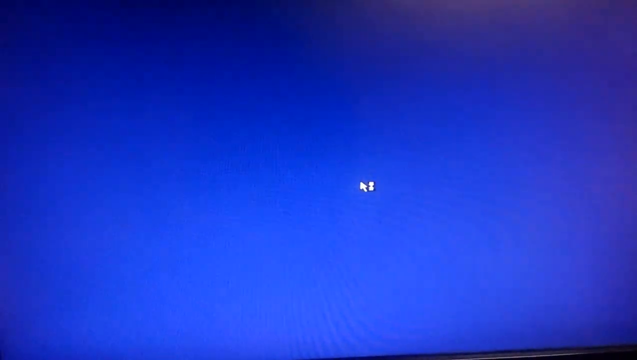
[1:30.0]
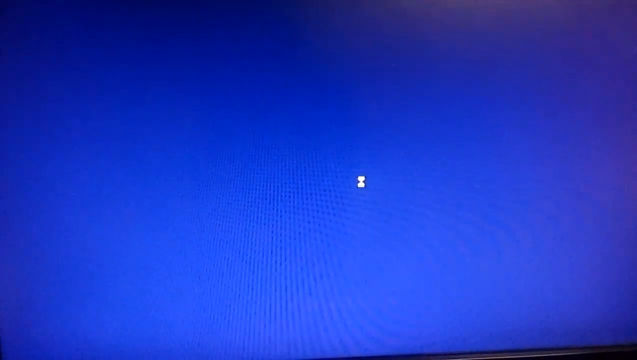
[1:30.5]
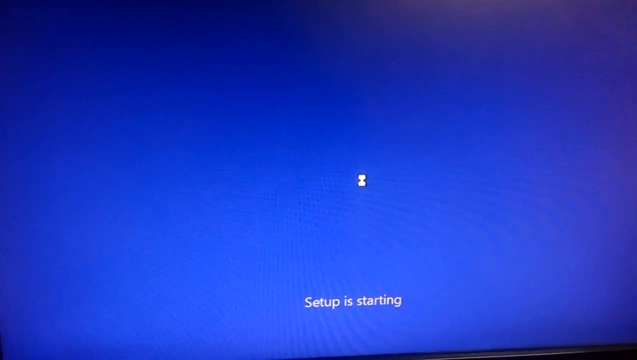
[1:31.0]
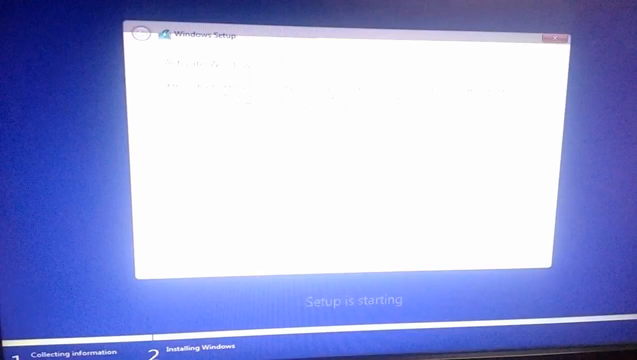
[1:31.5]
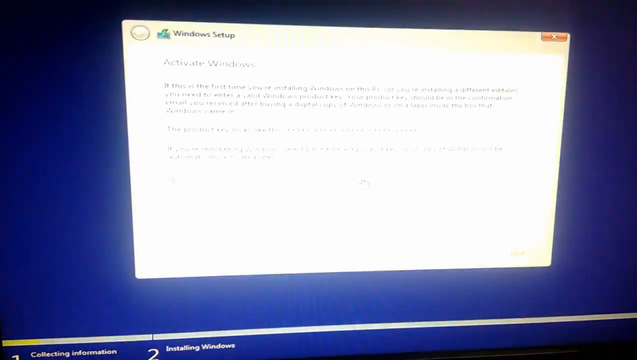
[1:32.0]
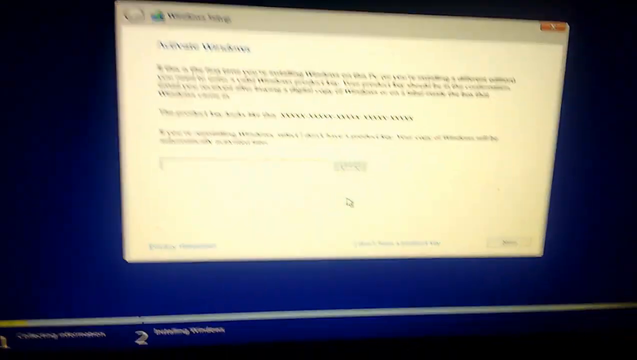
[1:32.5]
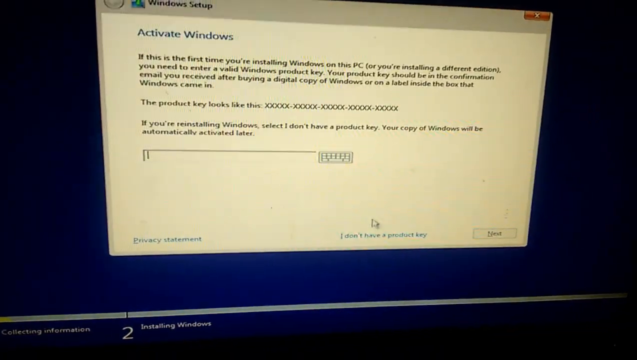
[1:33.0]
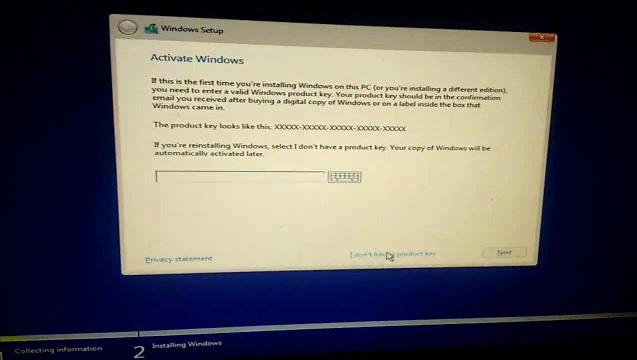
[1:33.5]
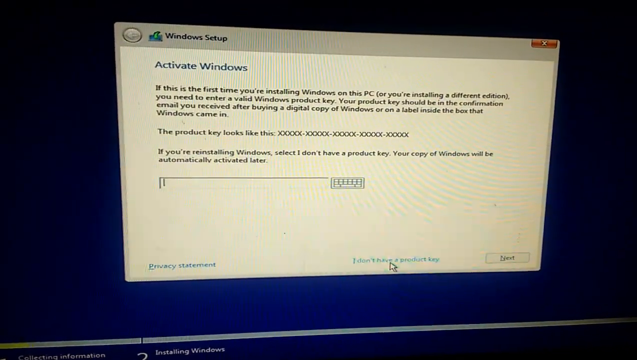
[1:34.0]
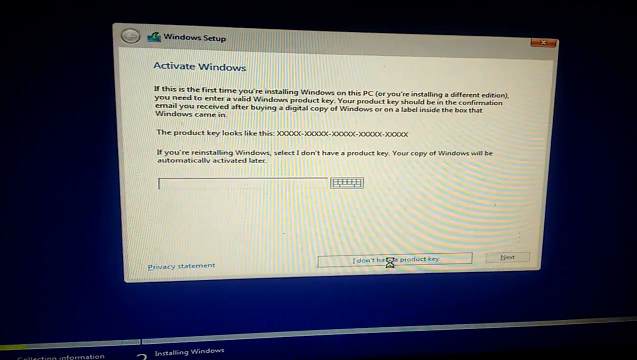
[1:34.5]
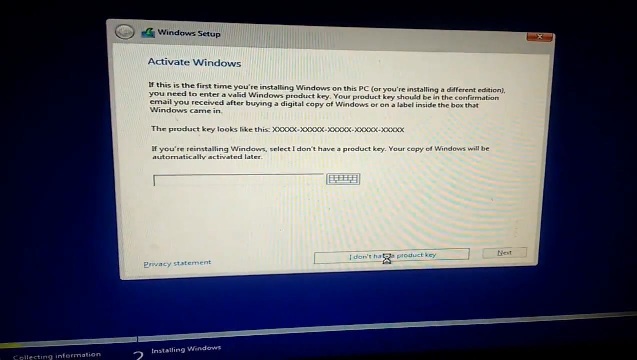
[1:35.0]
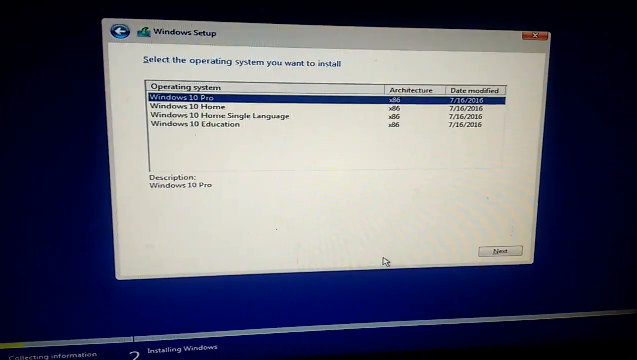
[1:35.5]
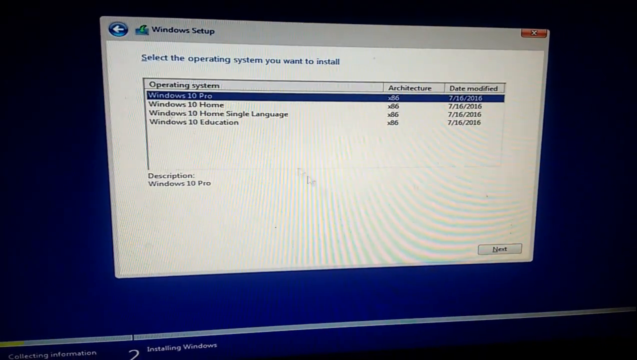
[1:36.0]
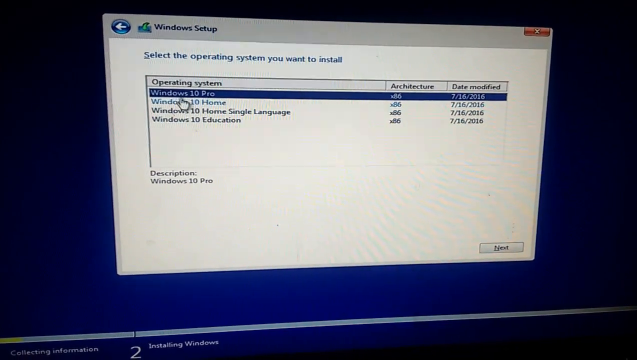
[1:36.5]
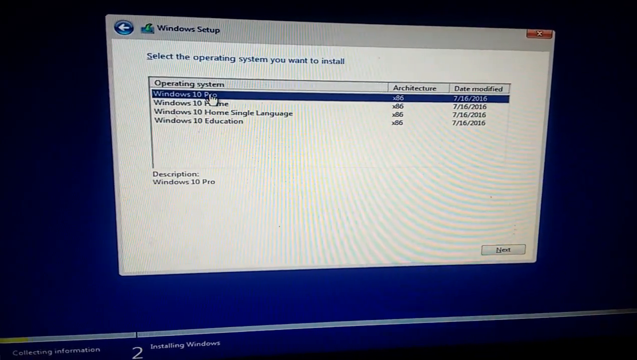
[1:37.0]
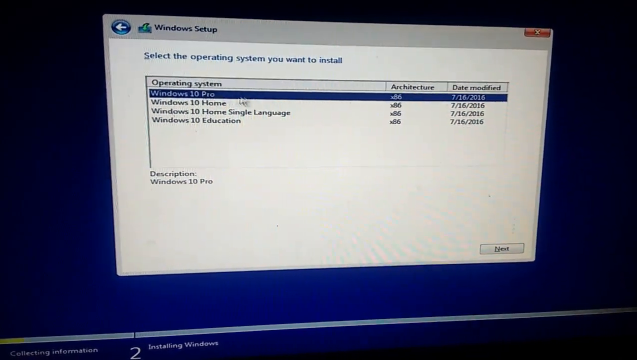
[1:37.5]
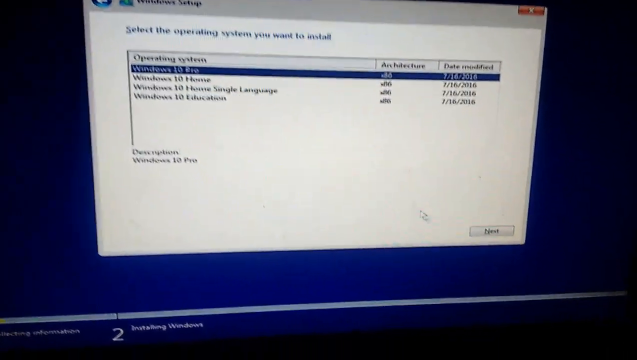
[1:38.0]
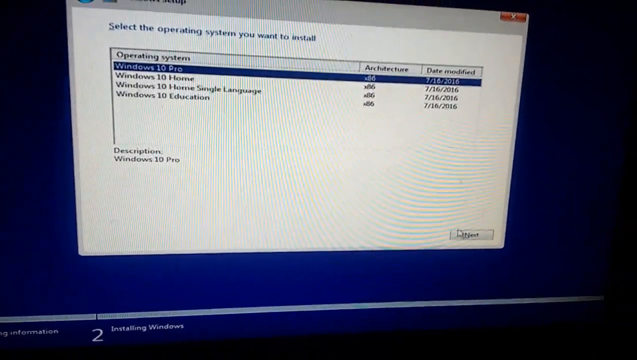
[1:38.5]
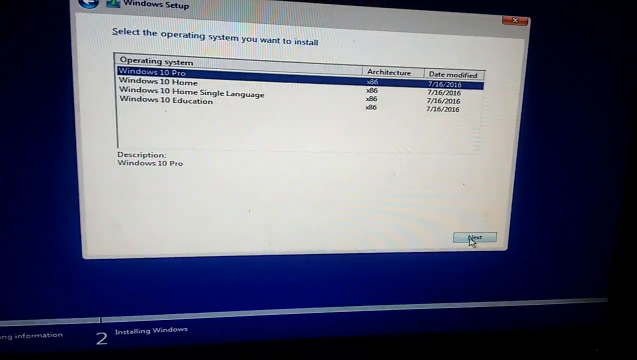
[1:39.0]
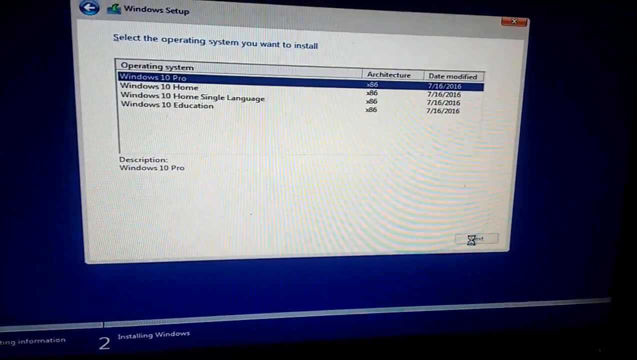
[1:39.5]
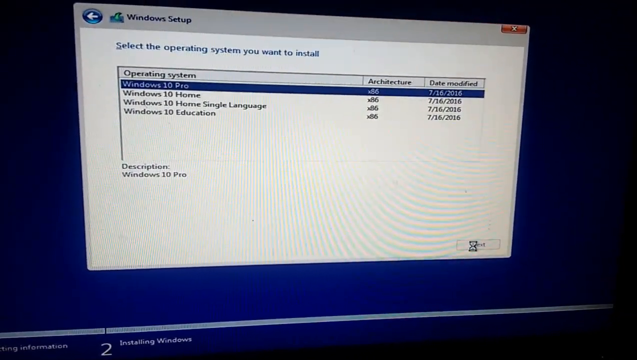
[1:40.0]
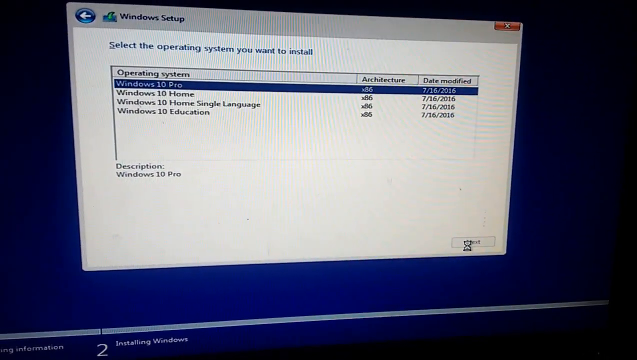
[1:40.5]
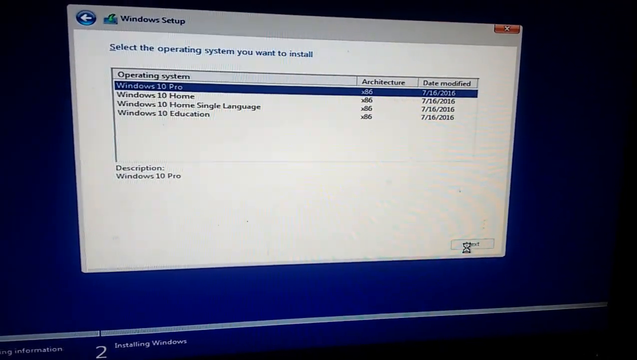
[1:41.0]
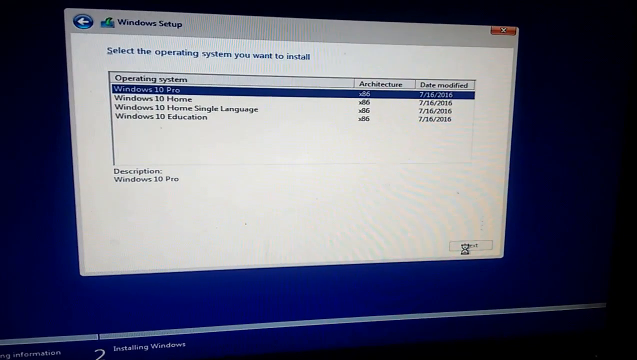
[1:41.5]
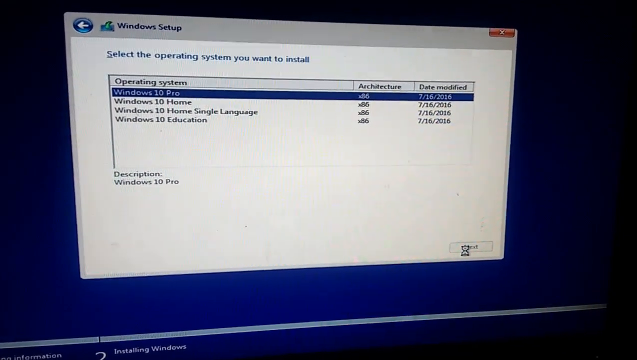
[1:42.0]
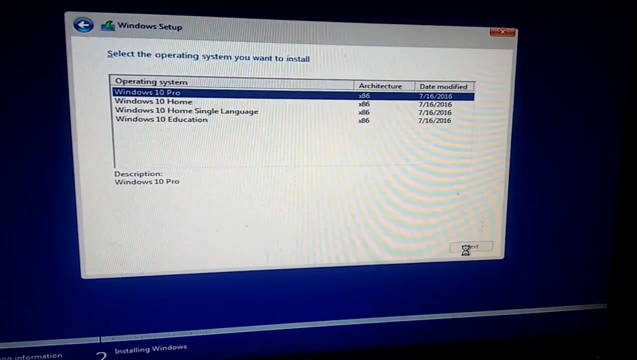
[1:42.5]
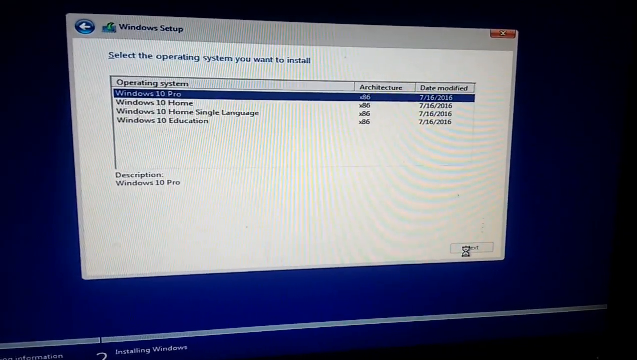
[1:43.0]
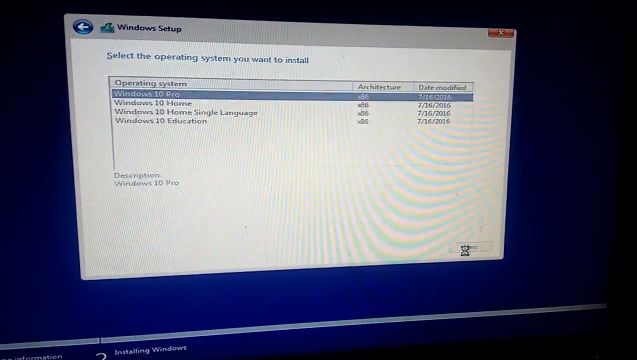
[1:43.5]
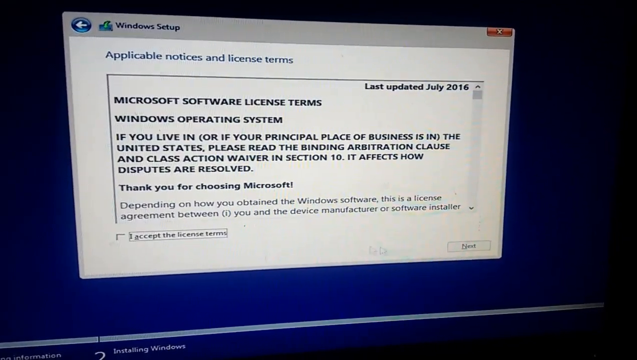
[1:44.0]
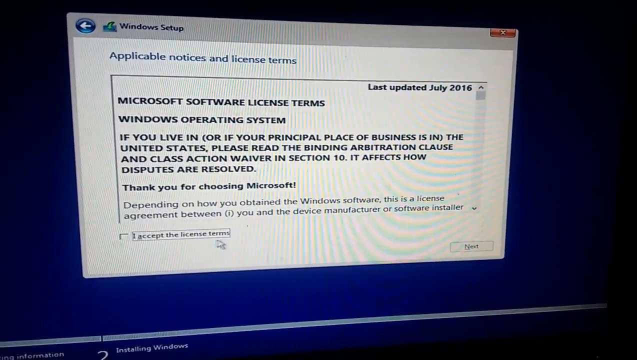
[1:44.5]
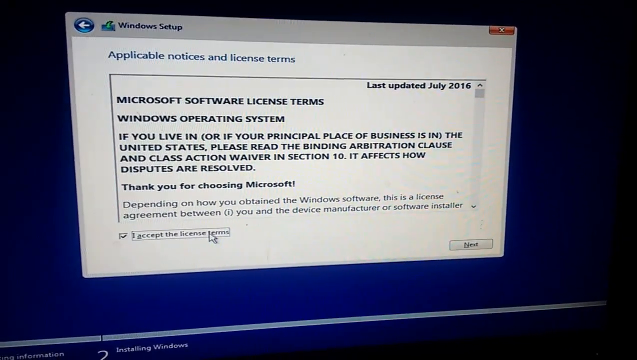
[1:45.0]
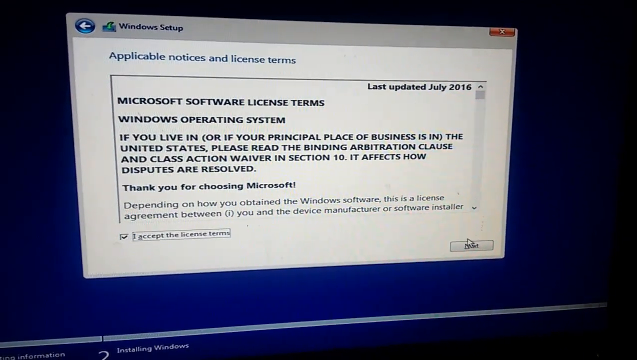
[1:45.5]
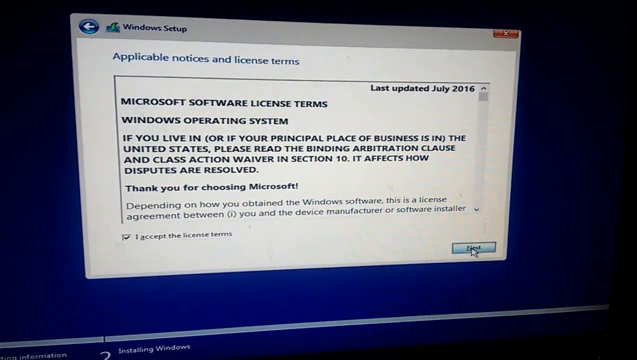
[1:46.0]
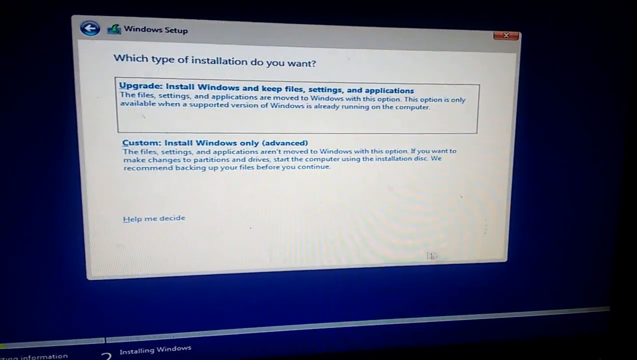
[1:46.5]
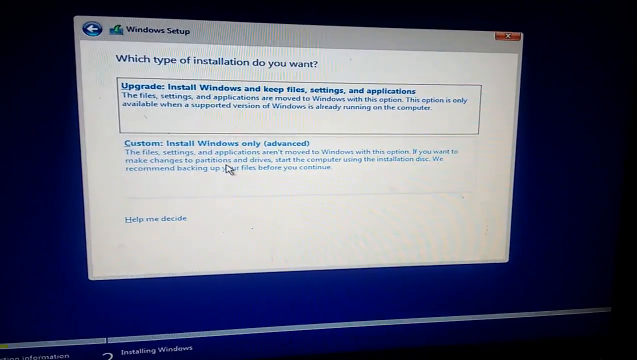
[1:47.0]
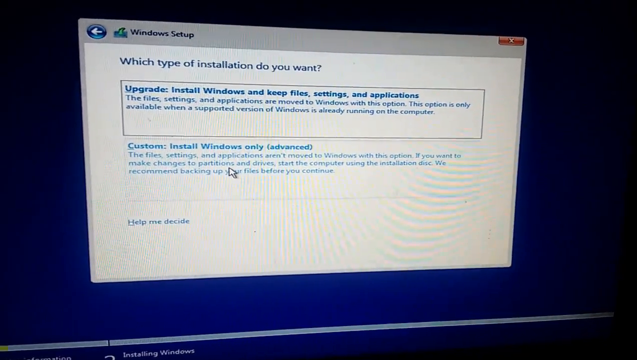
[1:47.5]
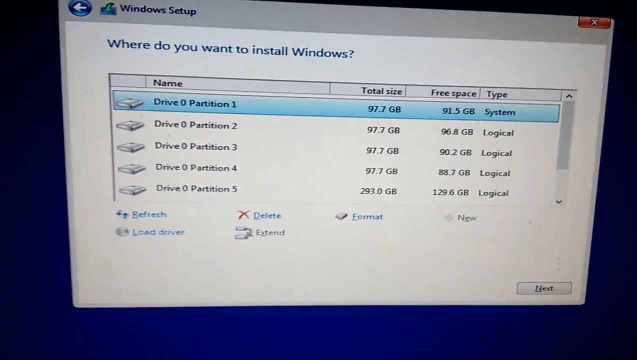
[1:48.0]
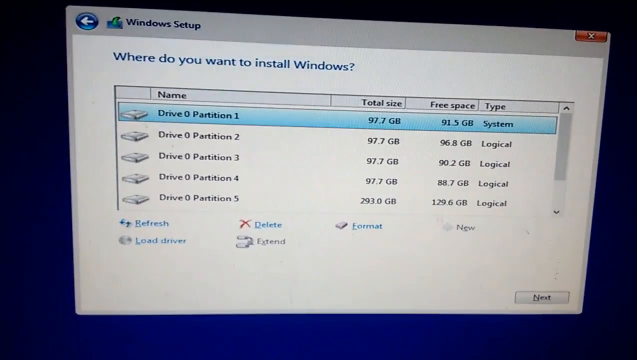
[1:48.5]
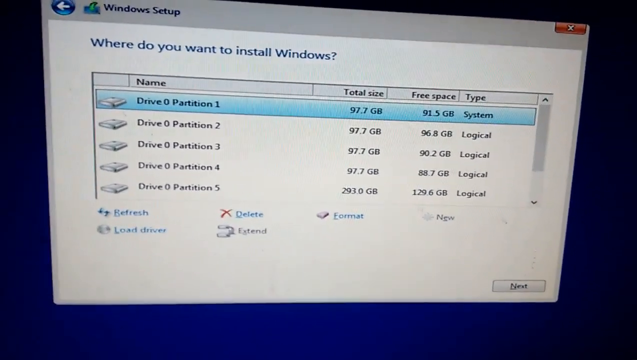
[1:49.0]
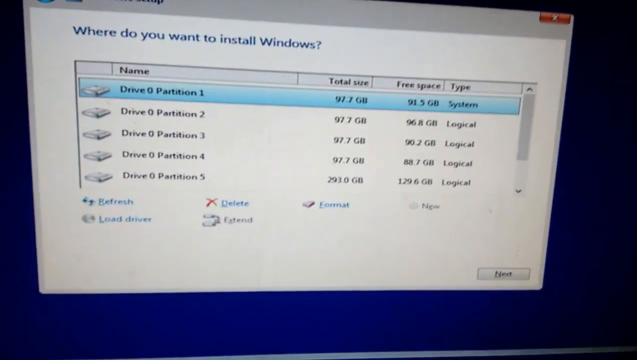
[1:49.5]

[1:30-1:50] He repeats the installation process with the hard drive now plugged in. He clicks install Windows and "setup is starting" appears. On the "Activate Windows" screen he clicks the button that says "I don't have a product key." He selects Windows 10 Pro and clicks Next. On the license terms screen he checks "I accept the license terms" and clicks Next again. On the installation type screen, offering to install Windows and keep files, settings and applications or a Custom installation of Windows only, he chooses Custom. Instead of a blank drive area with an error message, the screen now lists Drive 0 Partition 1 and partitions 2, 3, 4, 5 and 6. He selects Drive 0 Partition 1 and appears ready to proceed with the installation.